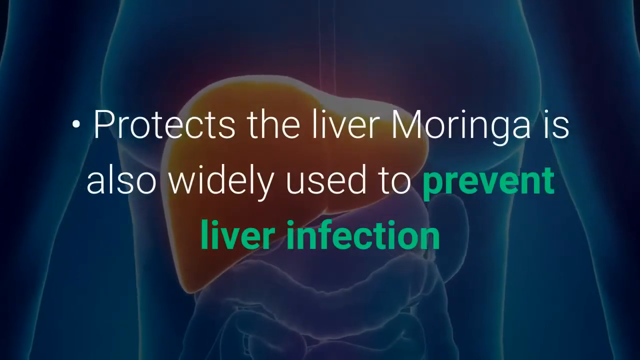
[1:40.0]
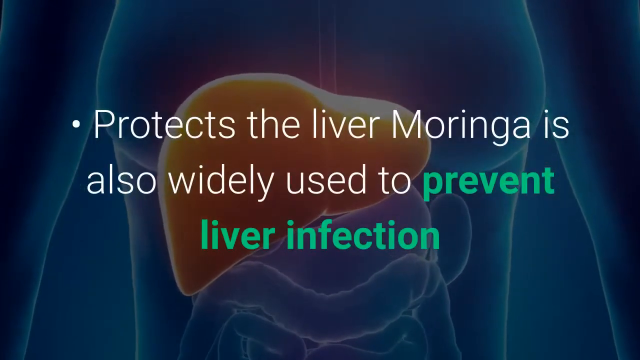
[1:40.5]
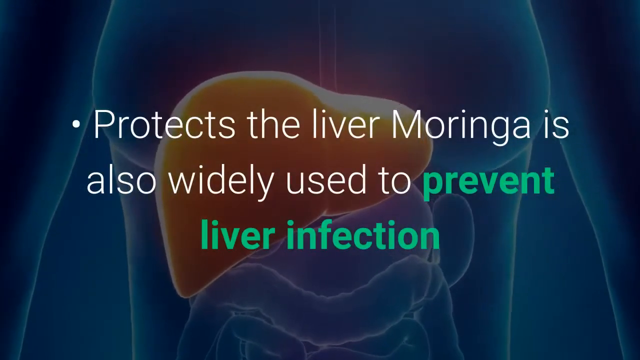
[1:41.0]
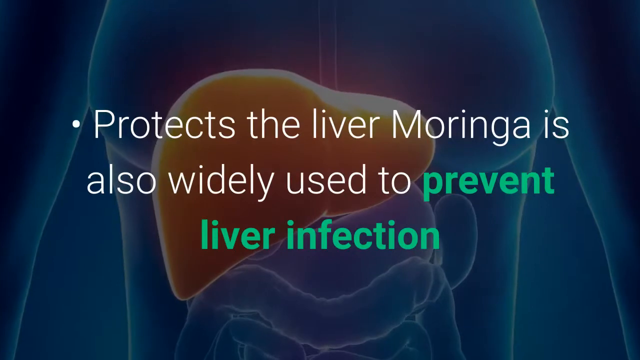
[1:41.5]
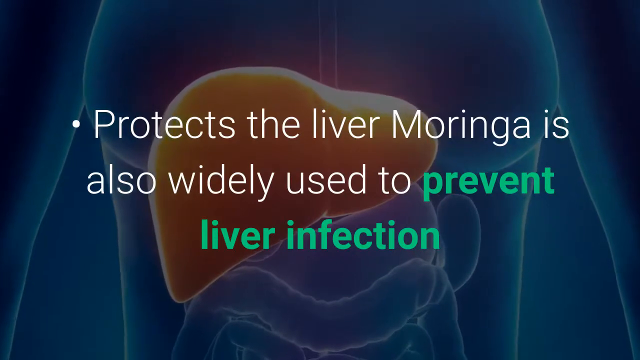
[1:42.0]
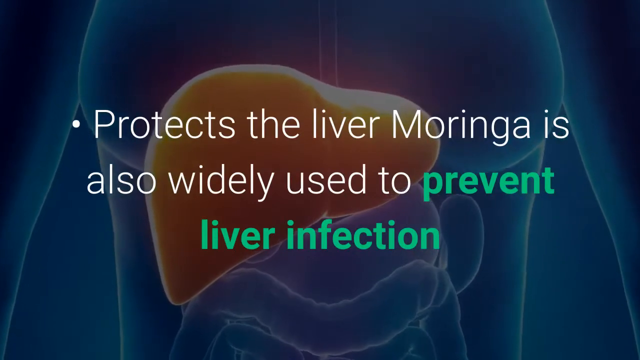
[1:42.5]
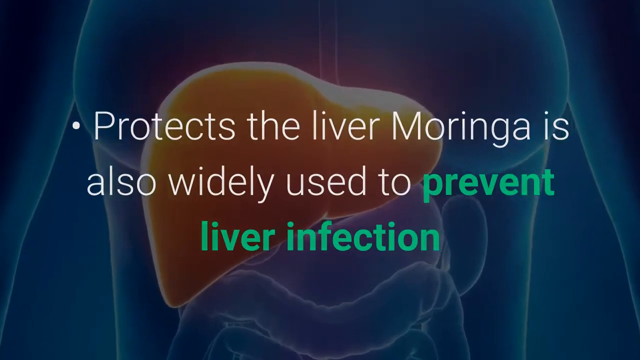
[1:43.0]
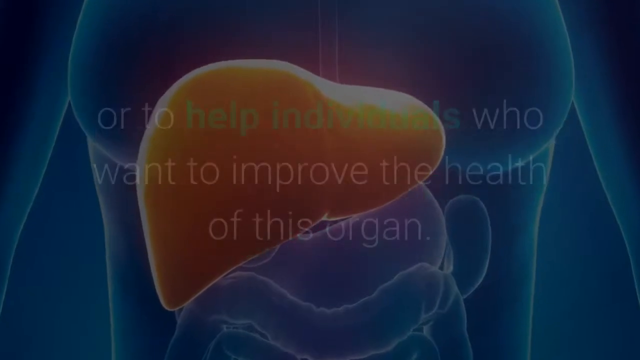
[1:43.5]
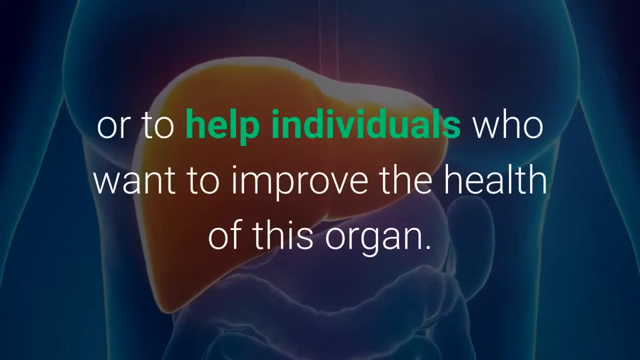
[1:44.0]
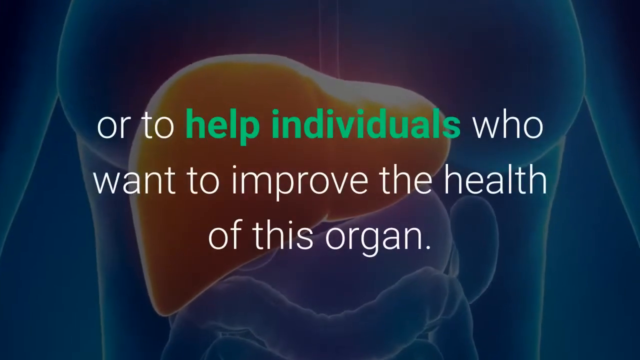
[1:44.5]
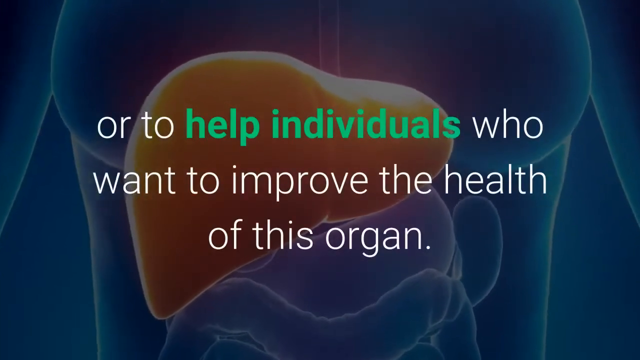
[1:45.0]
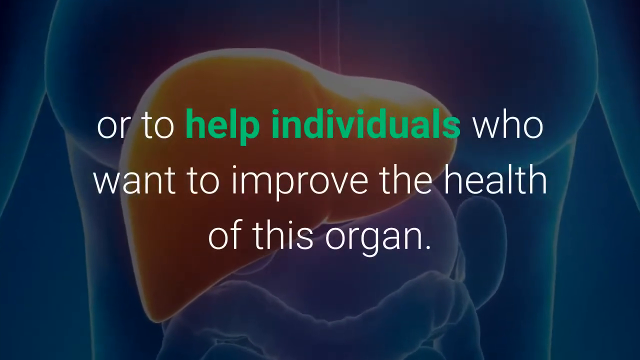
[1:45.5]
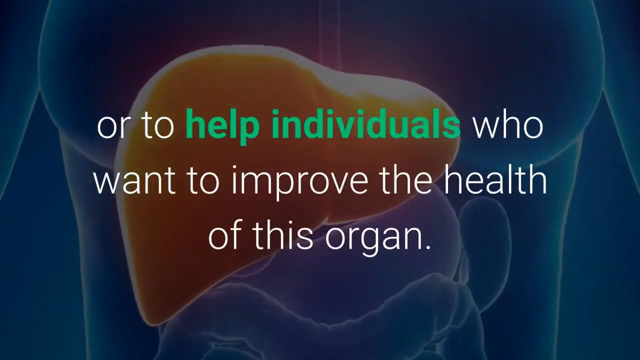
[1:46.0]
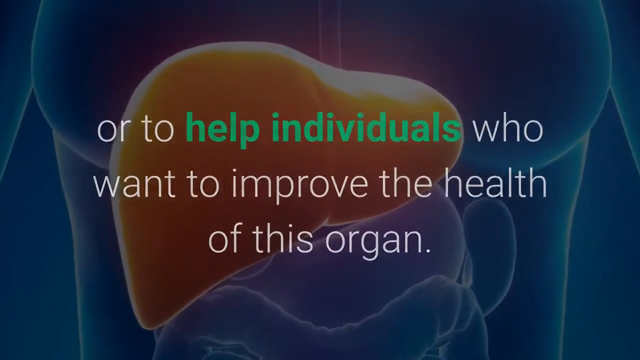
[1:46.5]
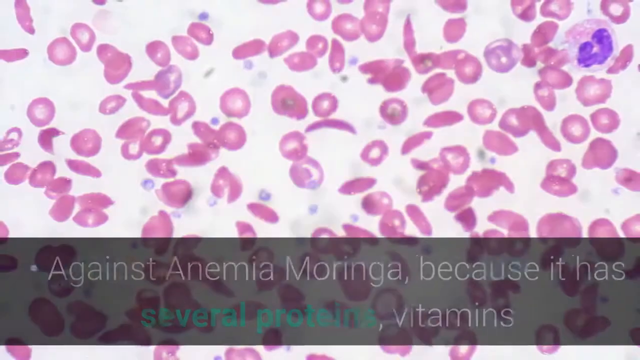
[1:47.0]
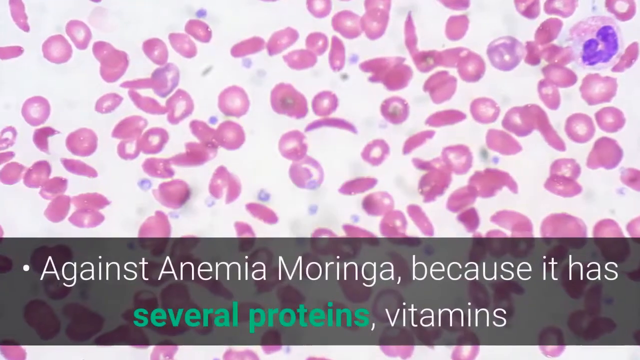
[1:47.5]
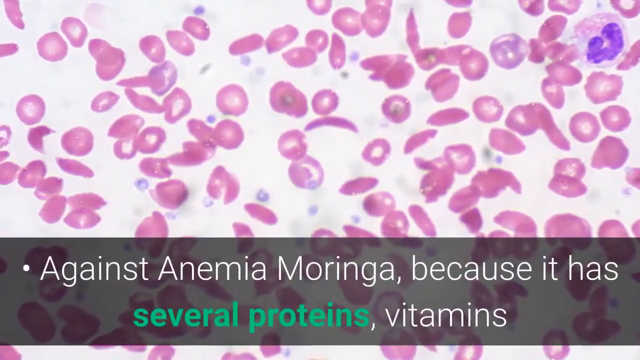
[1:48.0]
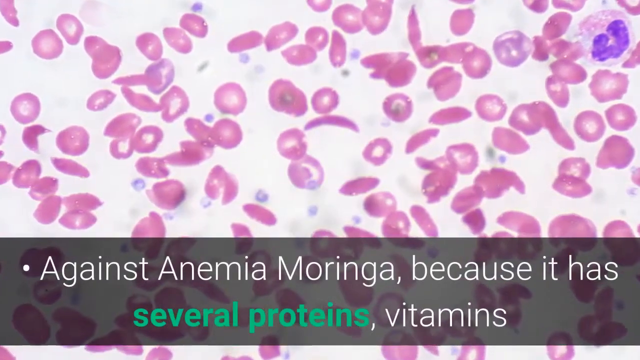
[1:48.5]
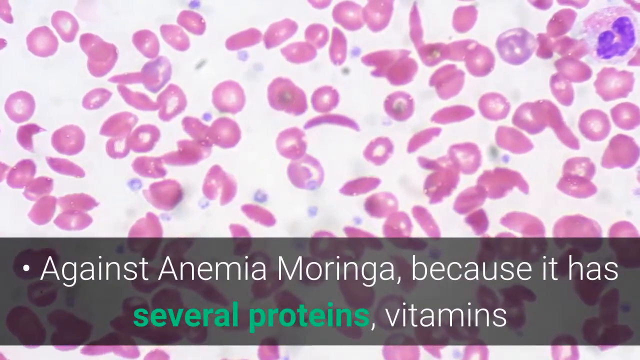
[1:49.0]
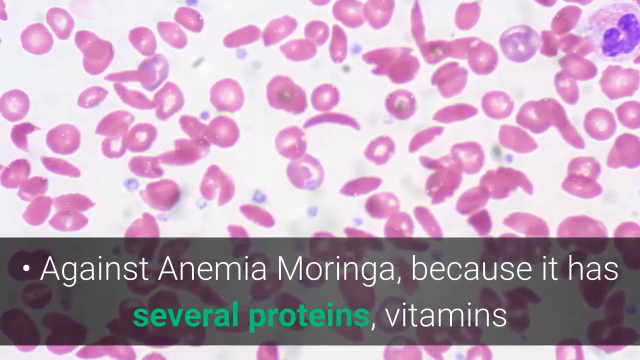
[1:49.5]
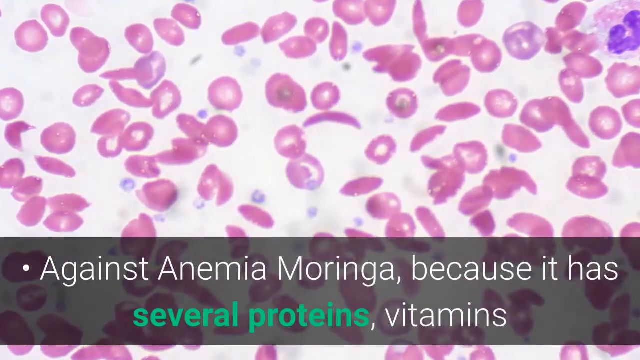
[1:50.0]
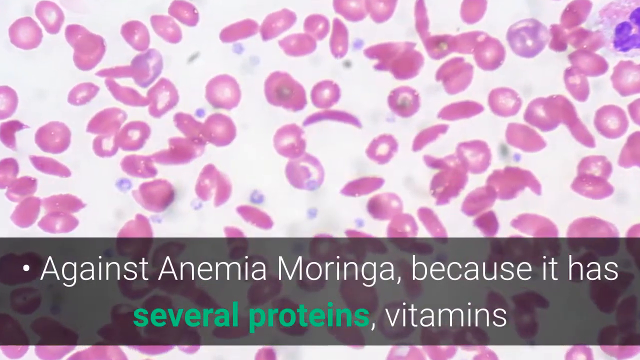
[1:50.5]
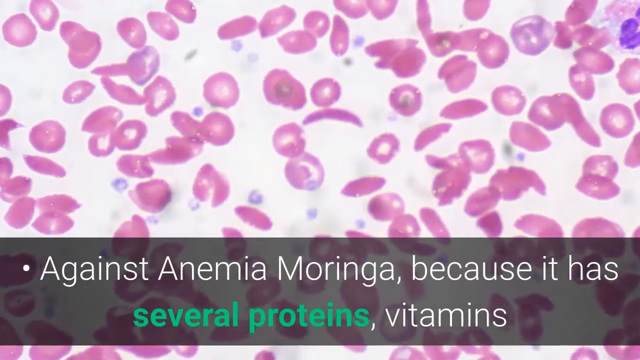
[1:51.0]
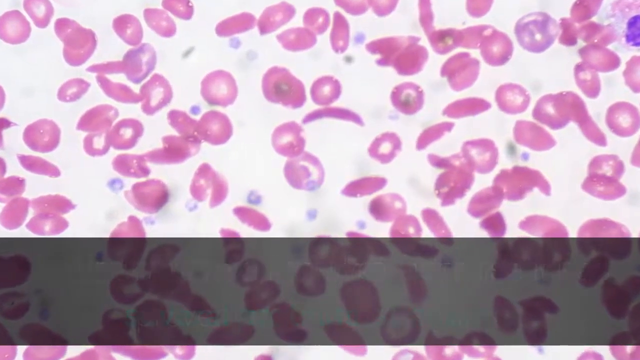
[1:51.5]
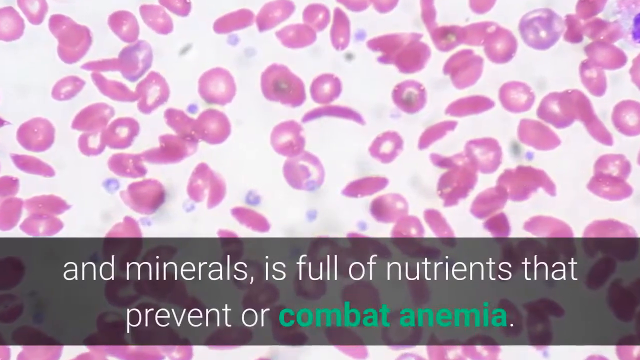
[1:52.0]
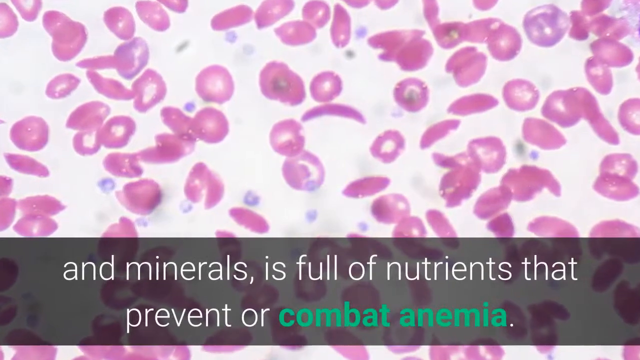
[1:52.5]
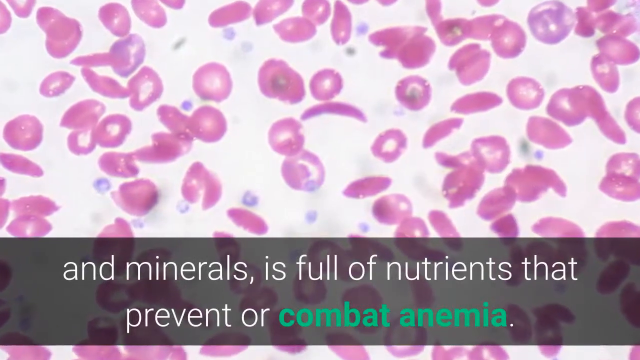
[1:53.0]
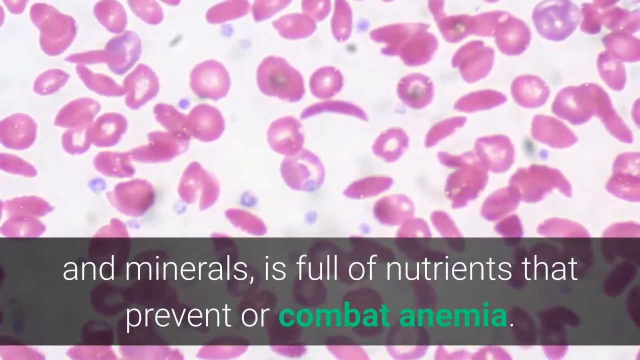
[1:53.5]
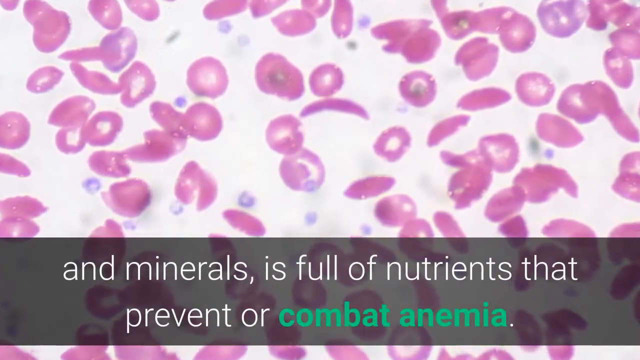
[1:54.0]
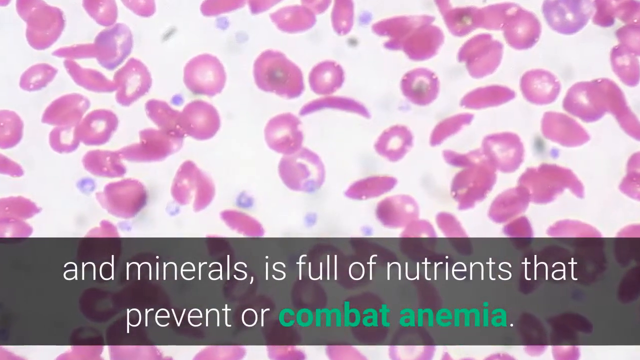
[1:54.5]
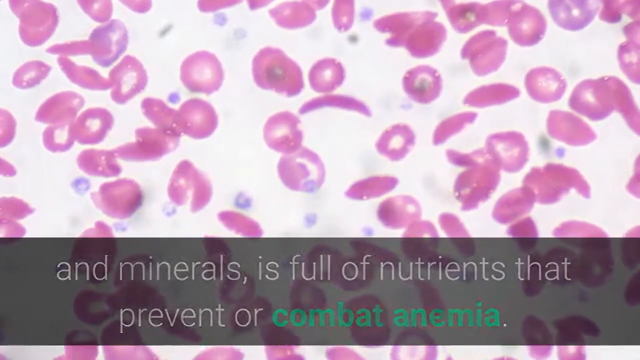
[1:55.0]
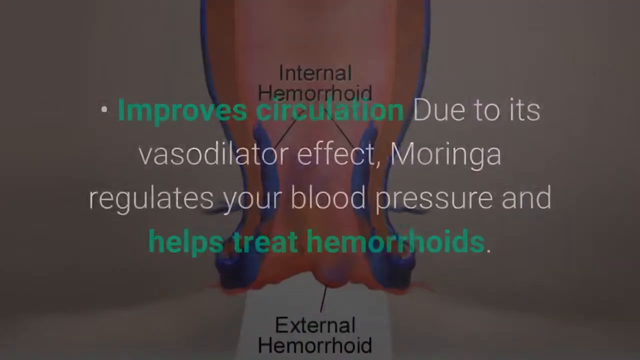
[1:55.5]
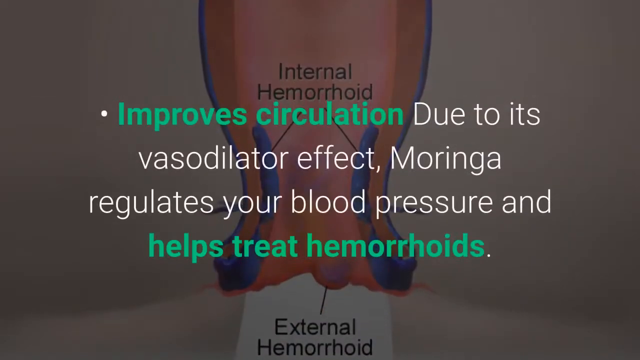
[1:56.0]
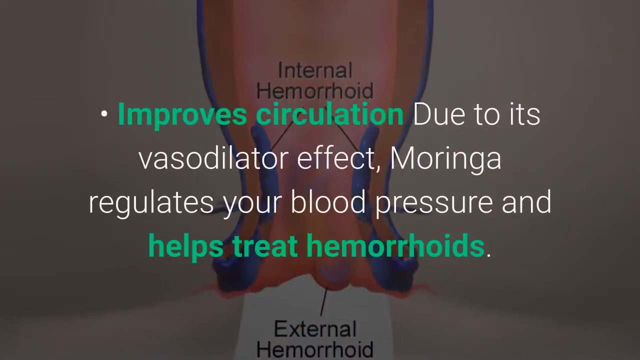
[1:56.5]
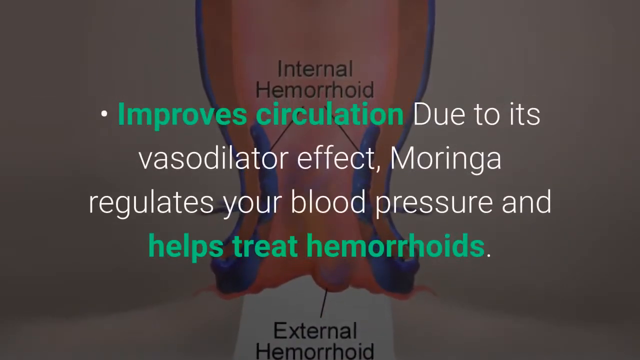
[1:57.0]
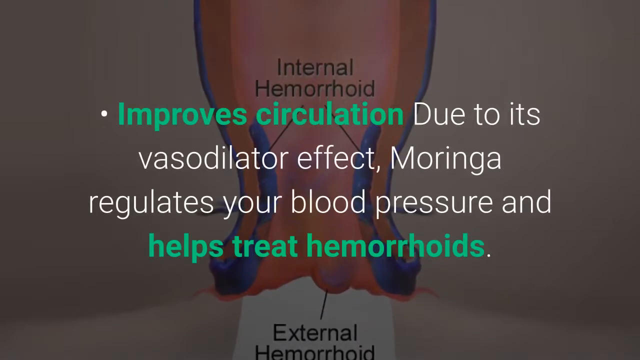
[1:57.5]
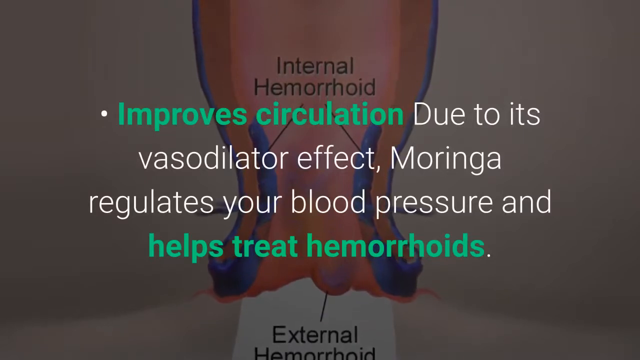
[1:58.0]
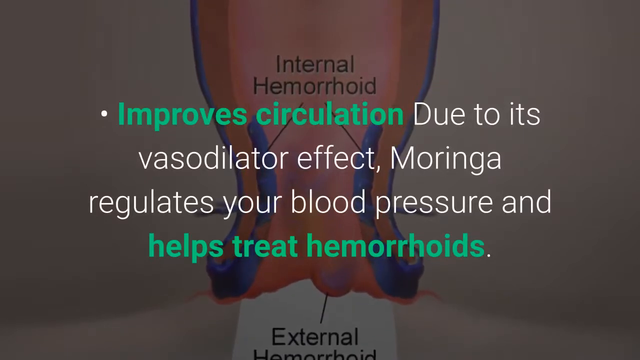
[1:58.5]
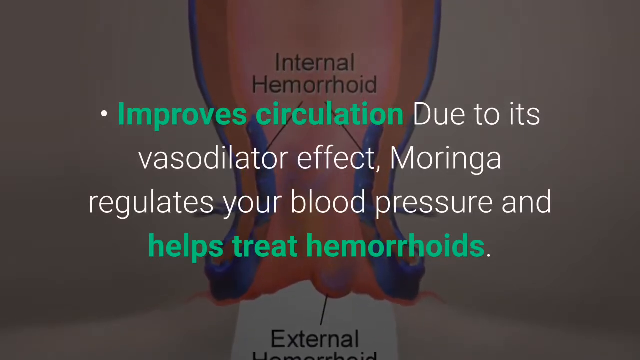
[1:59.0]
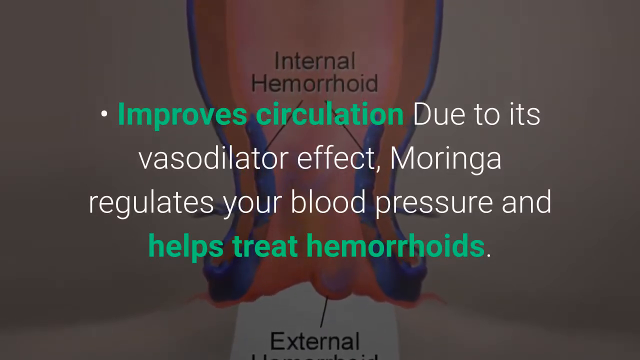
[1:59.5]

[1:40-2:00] Text says moringa "protects the liver" and then refers to sickle cell disease. Many sickled blood cells are shown on a slide. Text says it can also improve circulation.